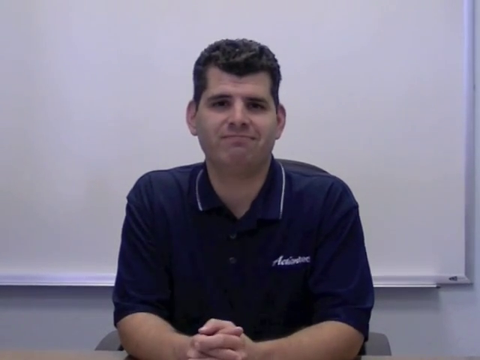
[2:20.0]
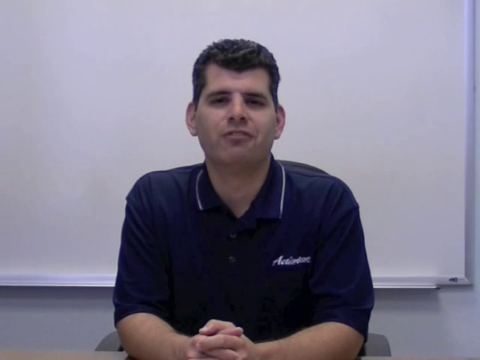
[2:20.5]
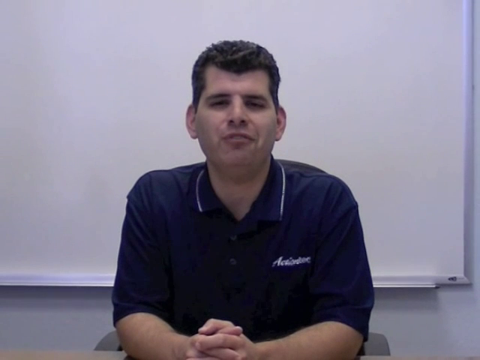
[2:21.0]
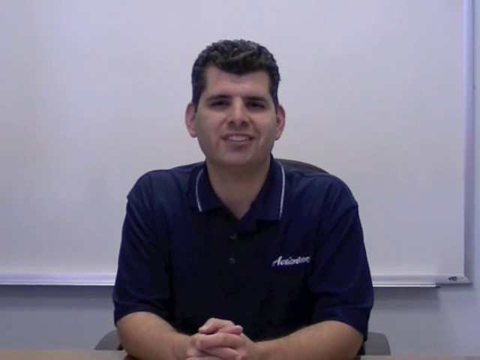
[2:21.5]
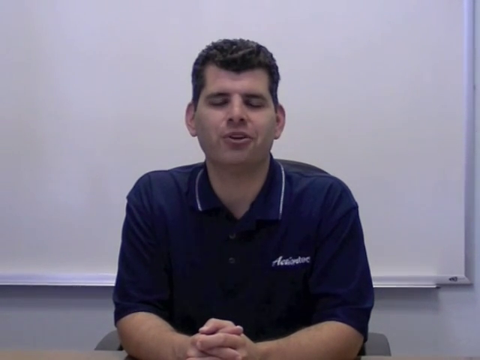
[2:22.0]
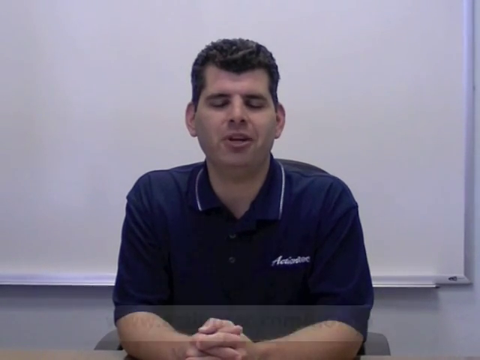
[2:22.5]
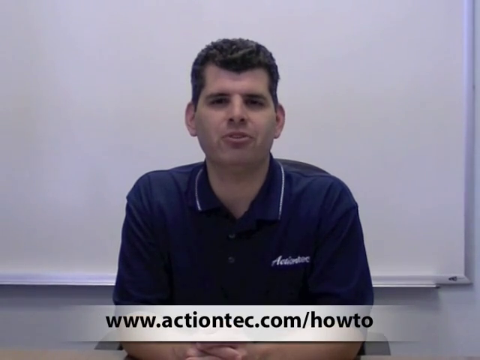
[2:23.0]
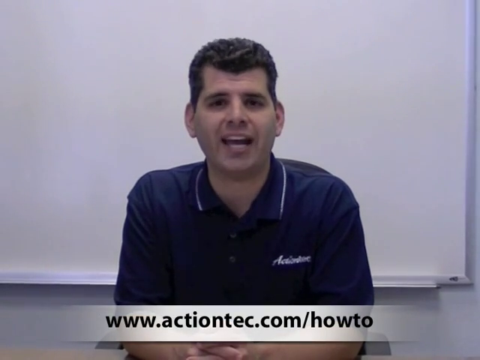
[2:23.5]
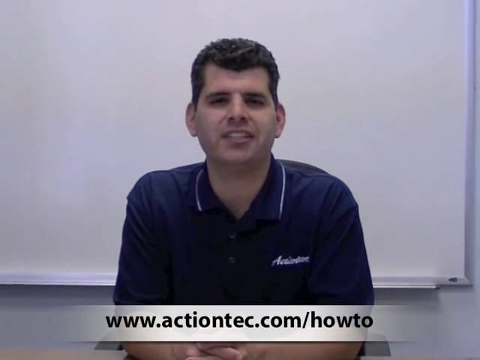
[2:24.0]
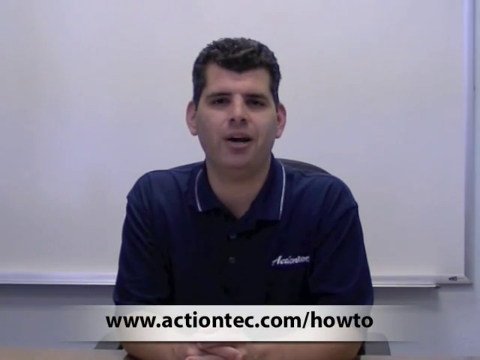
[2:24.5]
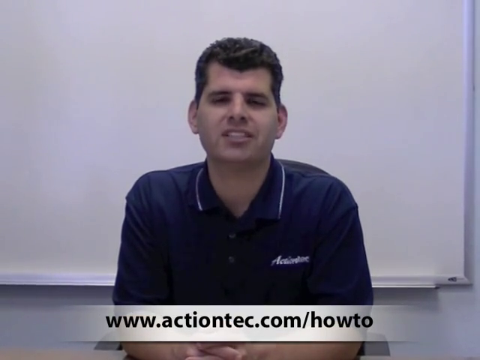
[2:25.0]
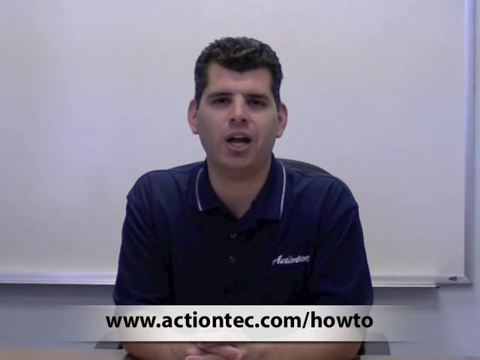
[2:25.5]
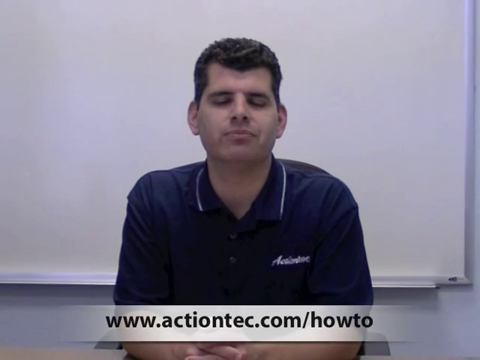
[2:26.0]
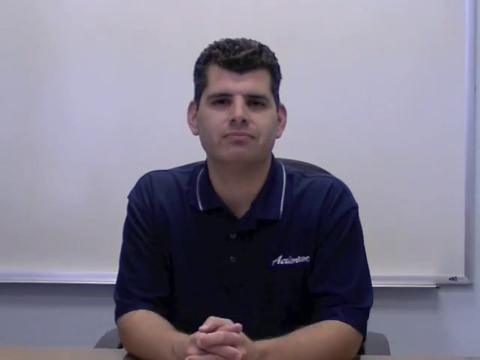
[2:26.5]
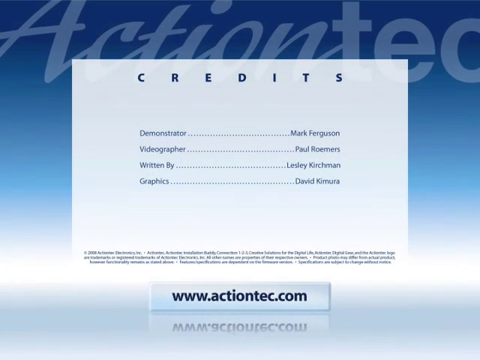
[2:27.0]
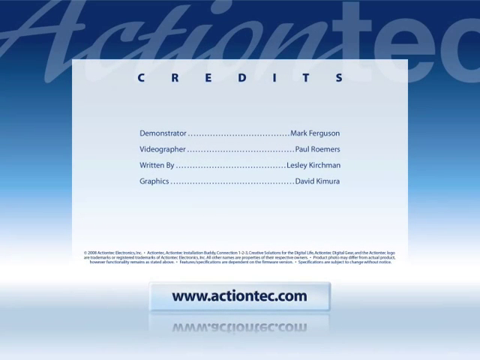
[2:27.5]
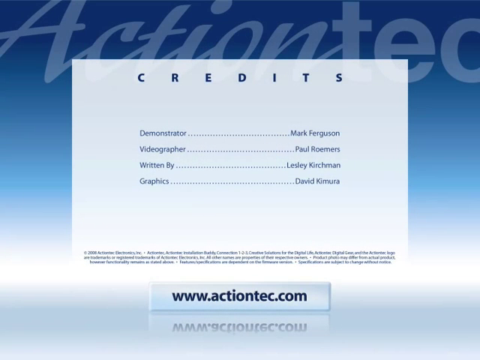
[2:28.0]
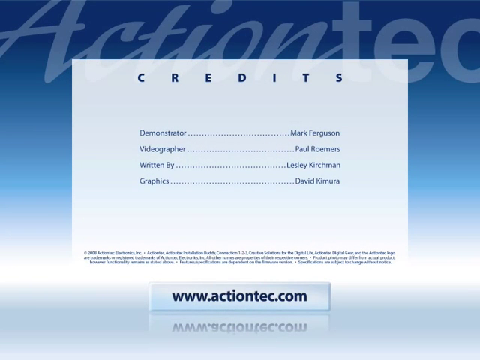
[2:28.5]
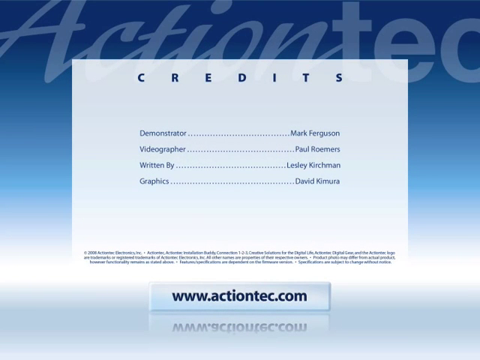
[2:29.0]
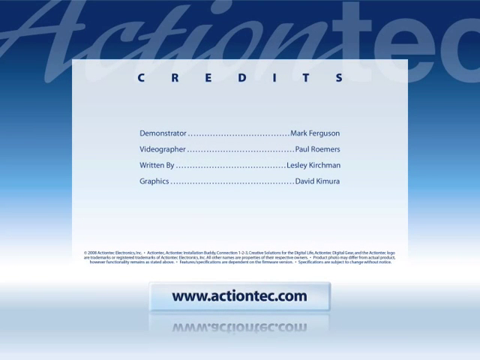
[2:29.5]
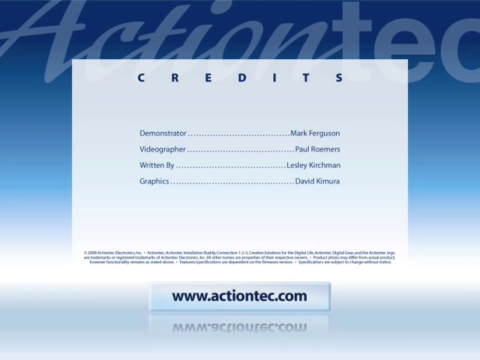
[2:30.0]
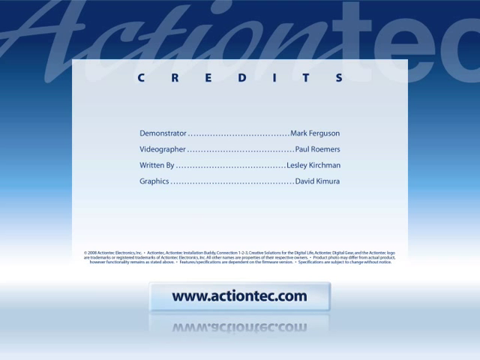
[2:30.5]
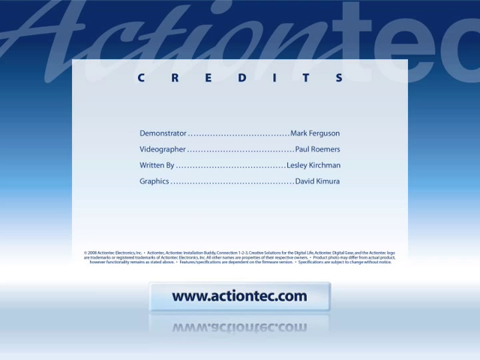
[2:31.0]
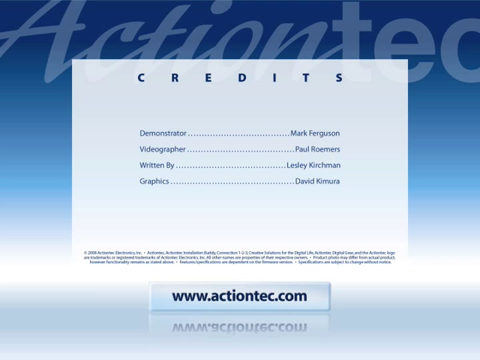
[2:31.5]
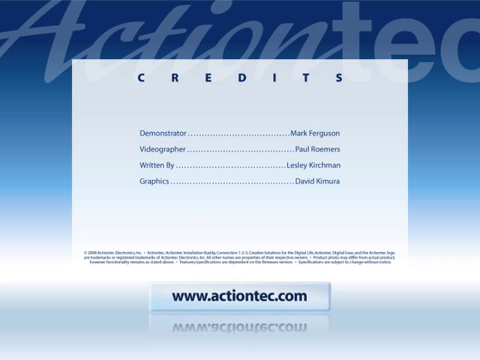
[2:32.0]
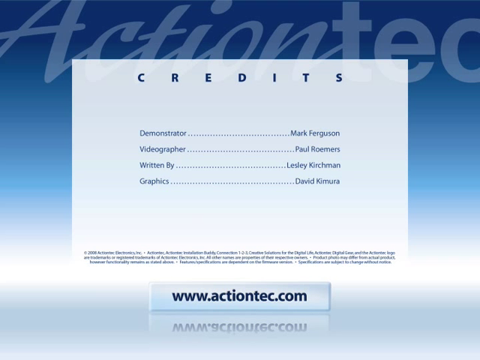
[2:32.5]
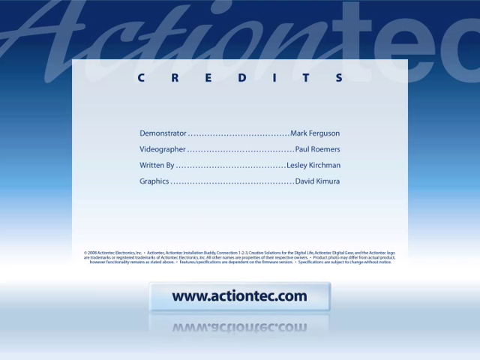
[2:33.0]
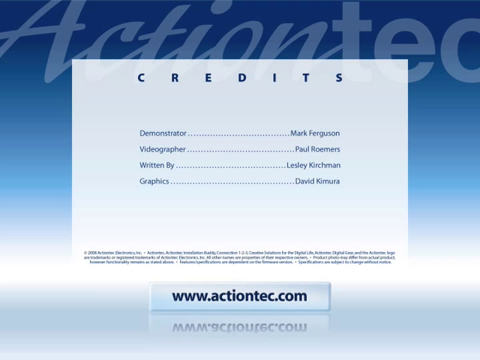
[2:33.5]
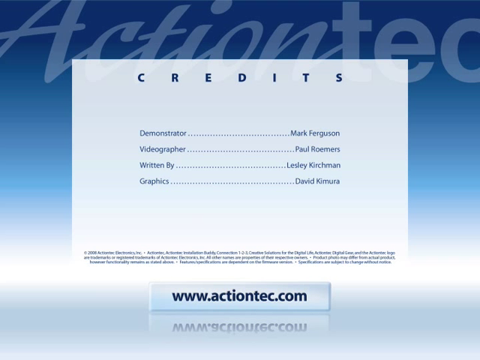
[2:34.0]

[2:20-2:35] A man sits facing the camera with a whiteboard behind him. He wears a blue shirt with text embroidered on the left side reading "Actiontec." A text overlay appears at the bottom of the screen reading "www.actiontec.com/how to." His mouth is moving and he is clearly talking towards the camera. The video then transitions to an outro image: a blue gradient background with a watermark-style Actiontec logo, overlaid by a white box. Inside the box is the title "credits," with credits below it to four people who created the video. A button-type object at the bottom has "actiontec.com" written inside it.